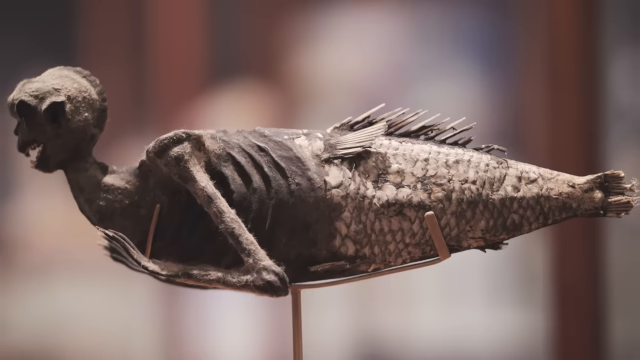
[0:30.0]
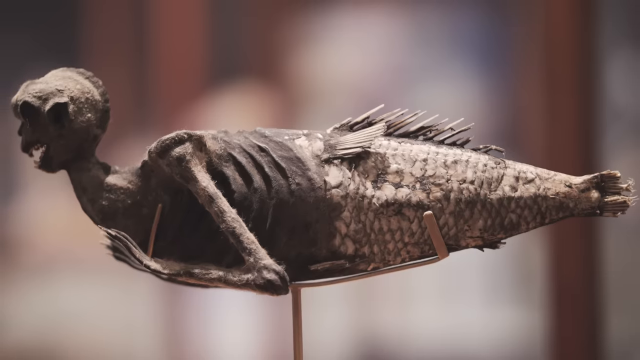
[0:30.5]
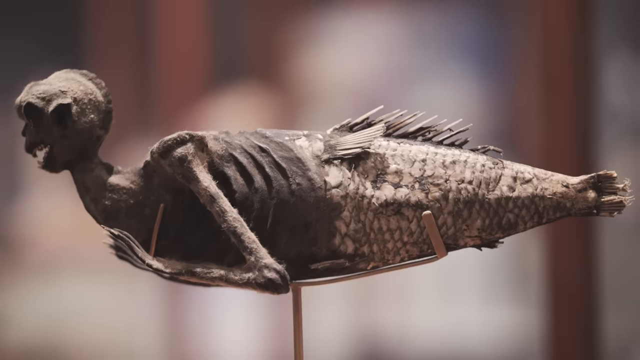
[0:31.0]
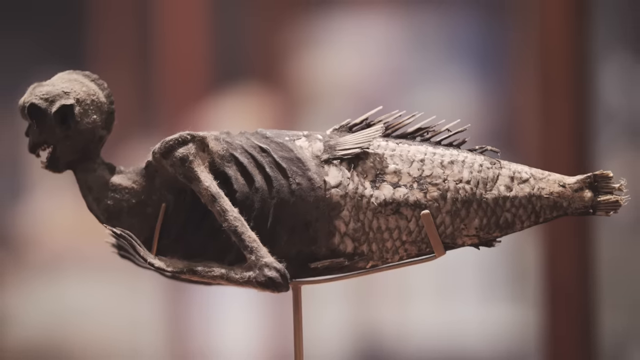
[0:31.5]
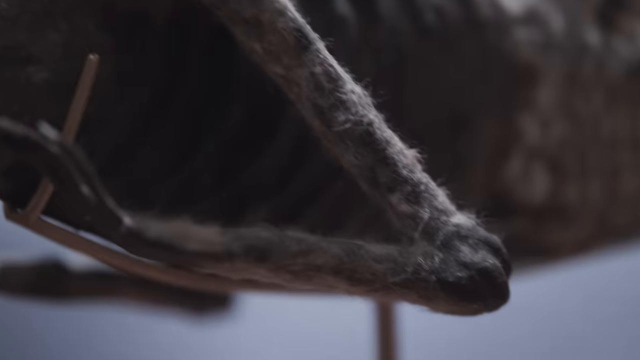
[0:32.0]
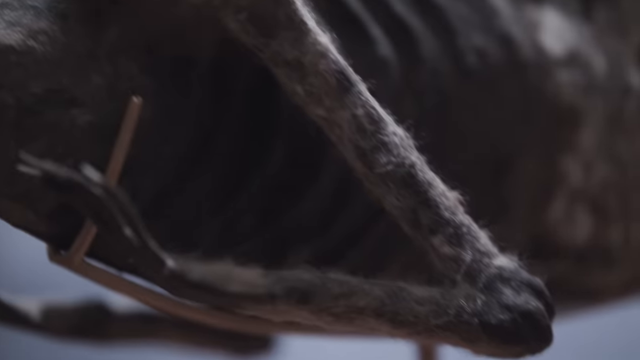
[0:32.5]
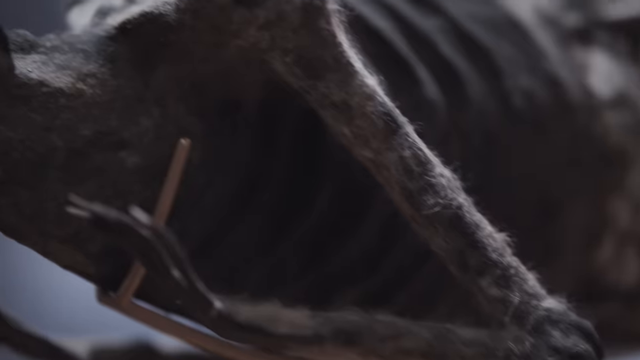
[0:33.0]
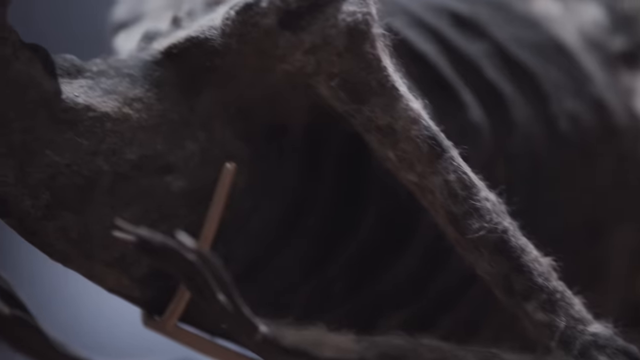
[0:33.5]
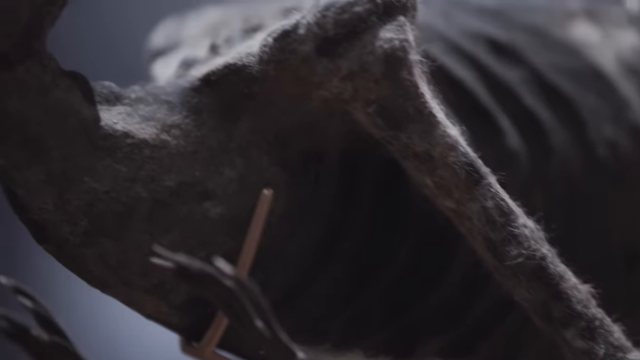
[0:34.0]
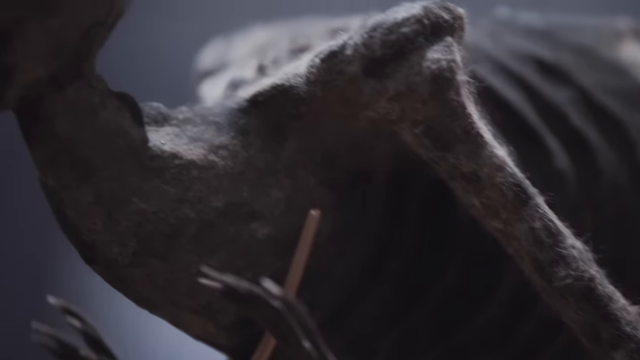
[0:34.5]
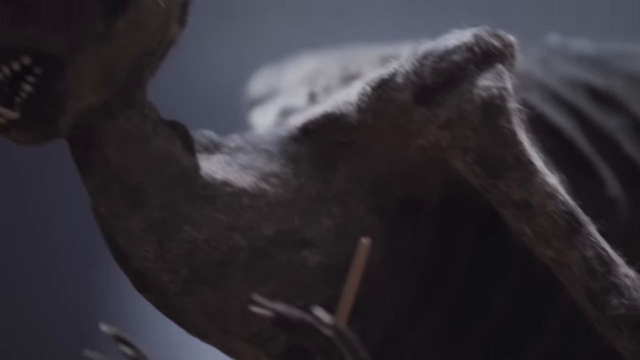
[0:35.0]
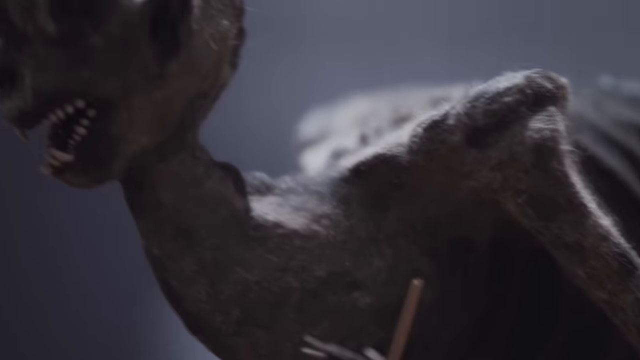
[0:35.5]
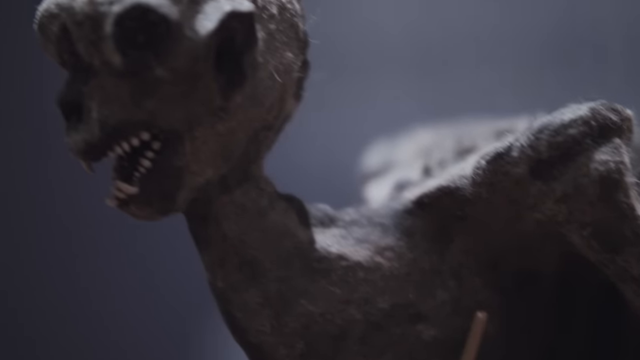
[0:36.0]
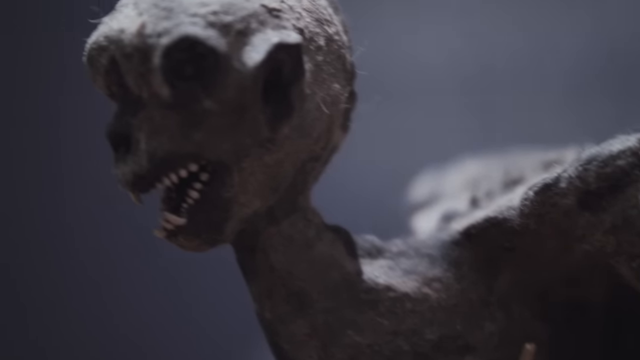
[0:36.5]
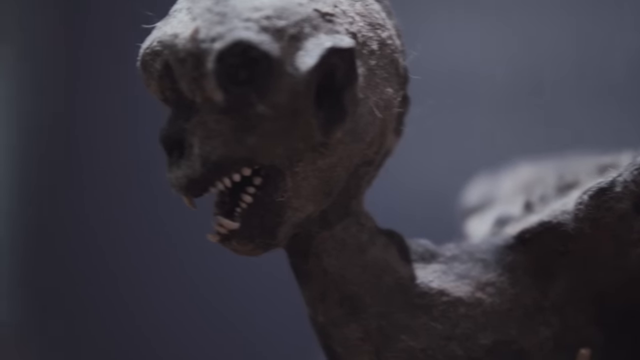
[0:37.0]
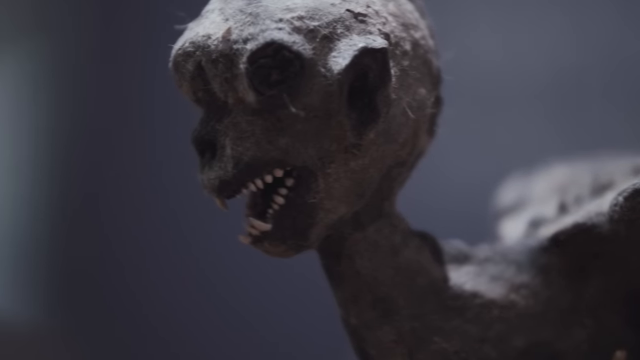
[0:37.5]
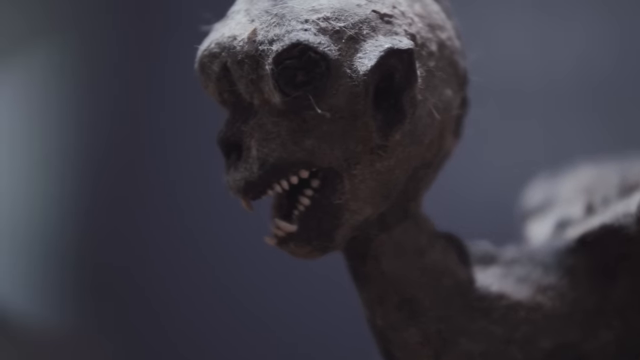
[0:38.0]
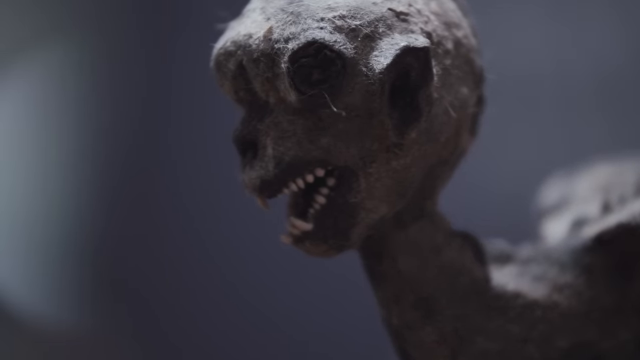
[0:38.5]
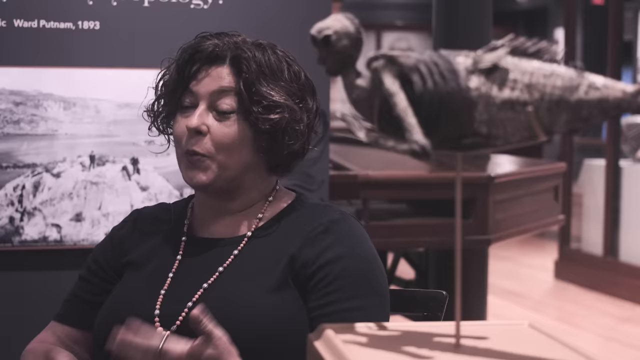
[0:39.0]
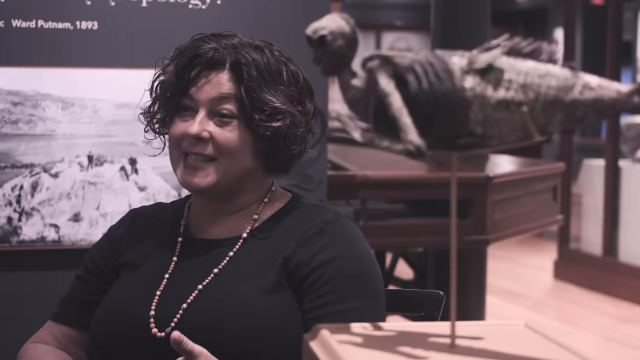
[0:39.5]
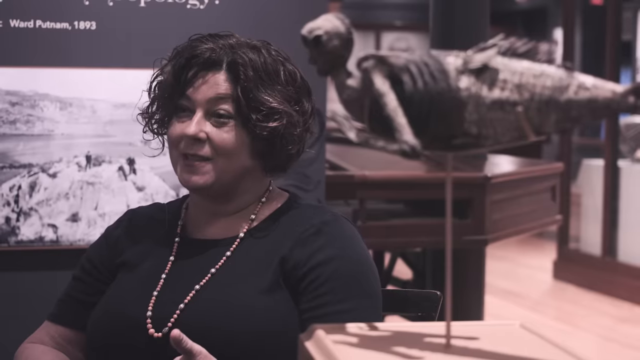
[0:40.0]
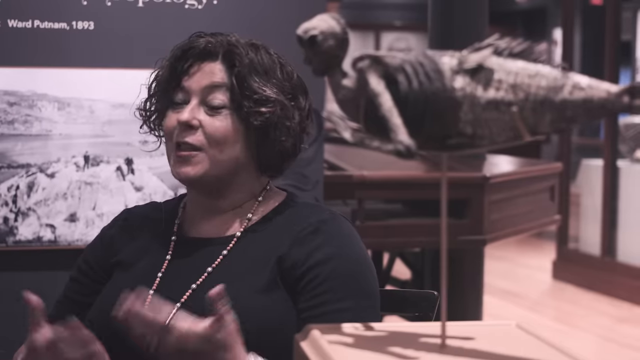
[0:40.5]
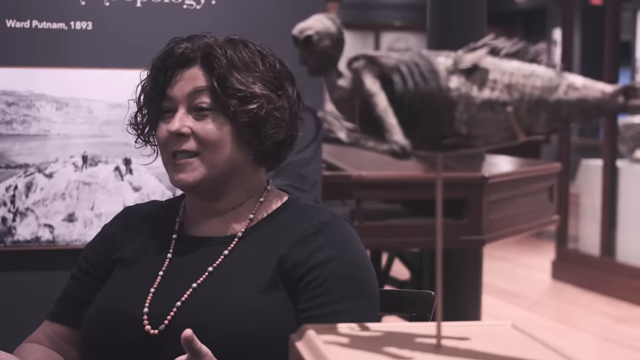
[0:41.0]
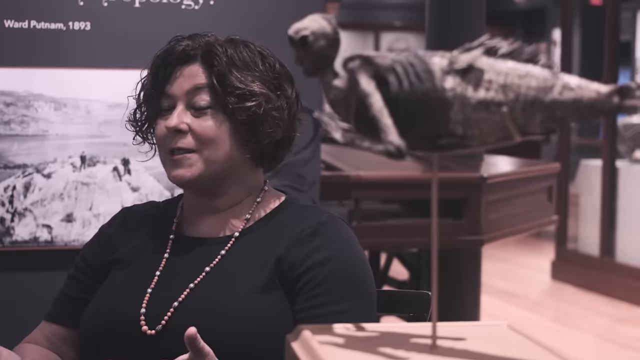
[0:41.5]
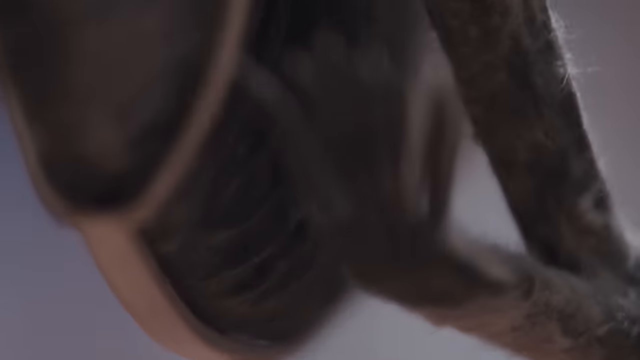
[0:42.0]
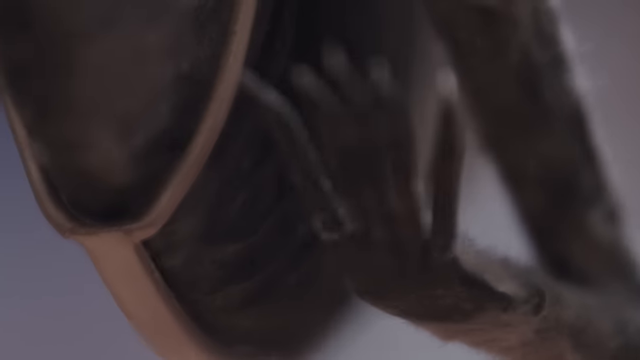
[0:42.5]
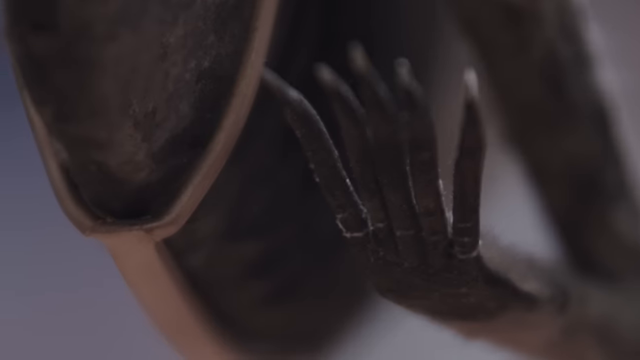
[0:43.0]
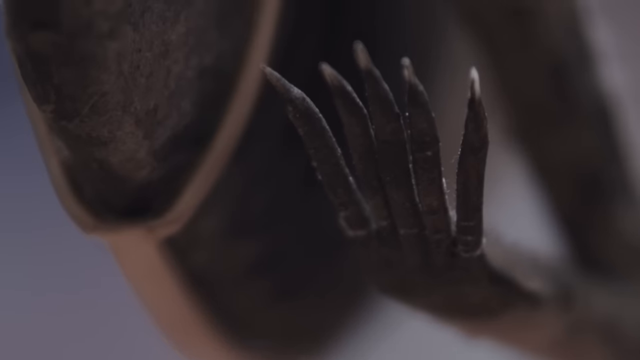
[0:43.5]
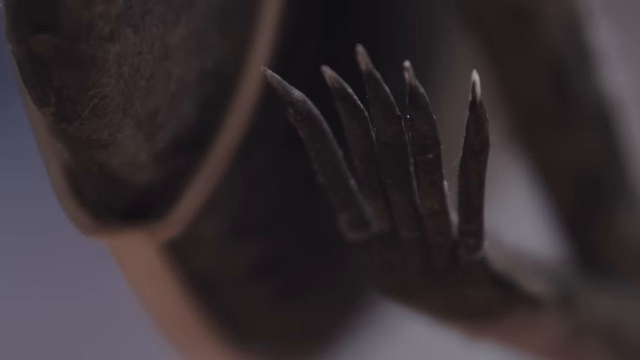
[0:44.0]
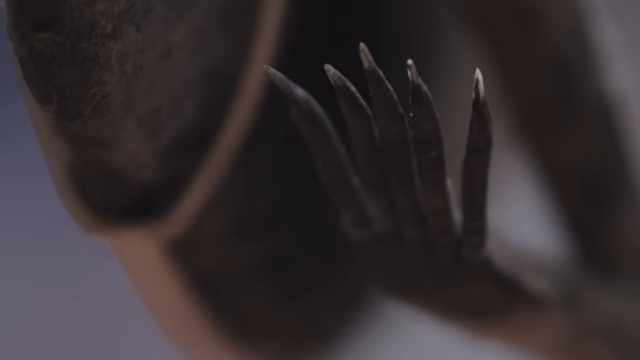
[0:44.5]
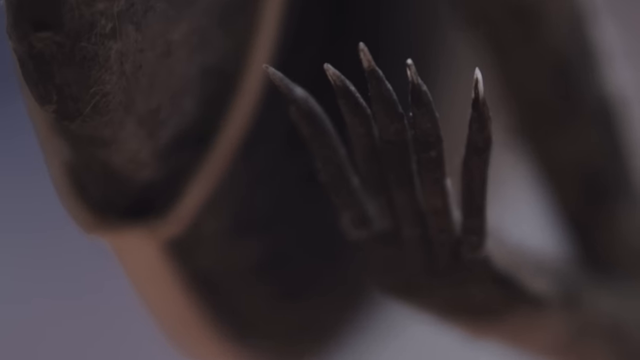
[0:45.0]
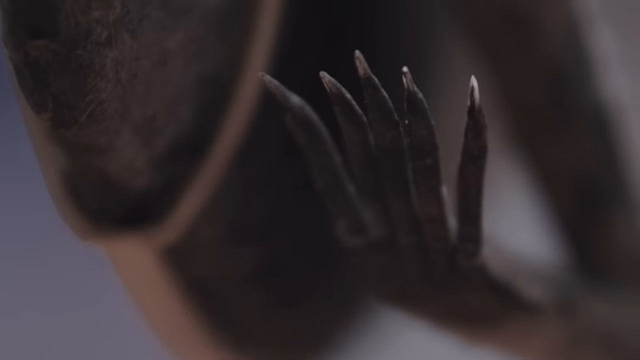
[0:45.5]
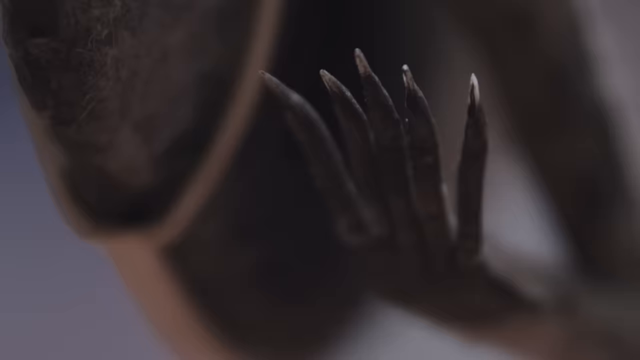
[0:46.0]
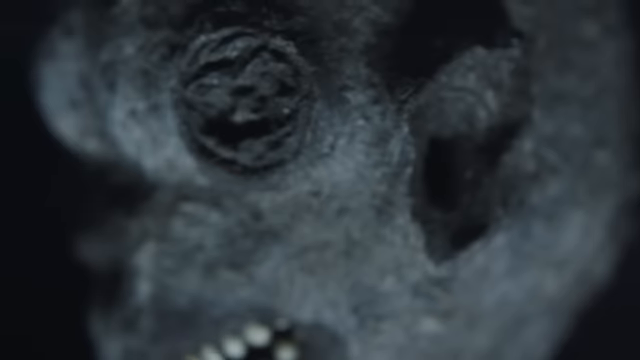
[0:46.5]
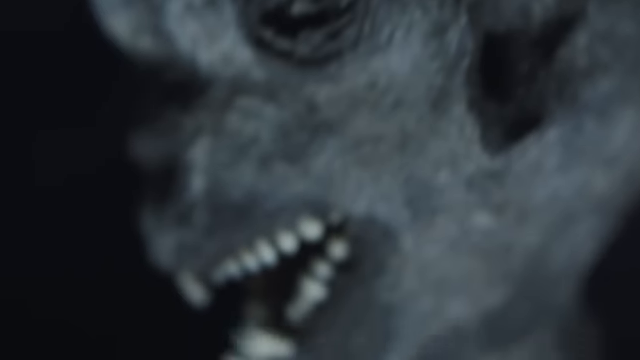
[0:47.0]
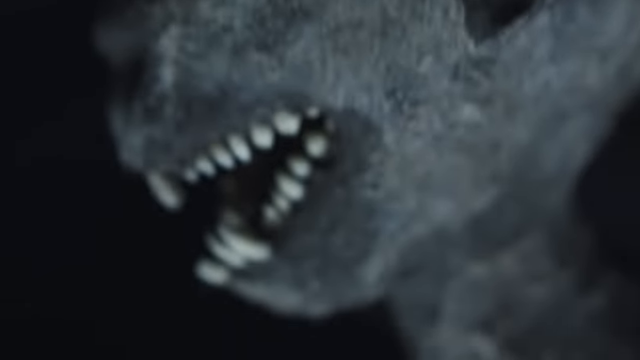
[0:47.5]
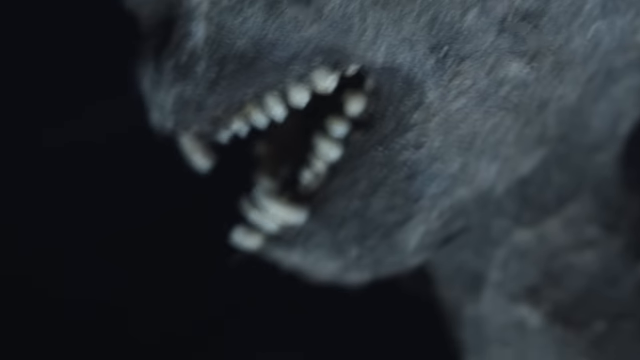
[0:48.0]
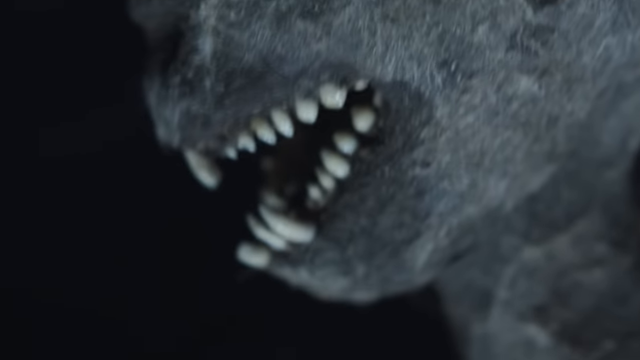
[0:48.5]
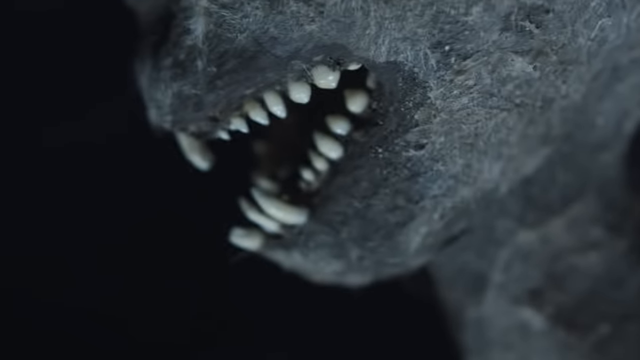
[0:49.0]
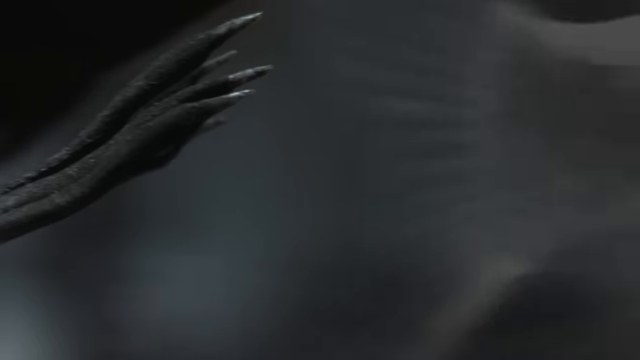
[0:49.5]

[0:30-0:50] The creature appears to have a very small, tiny human-like arm, somewhat like a baby in a womb, along with its fishtail. It is set up on display in a museum, and it is unclear whether it is real or a sculpture. The woman is smiling. Next to her is a dark gray board that is only partly shown; on the left side of the screen it has a black-and-white picture of mountains, and text that apparently reads "Putnam," and "1893." The creature appears to have tiny claws or fingers. It looks as if it is about to swim away on its display stand, which is wooden, beige, and faces the left side of the screen.